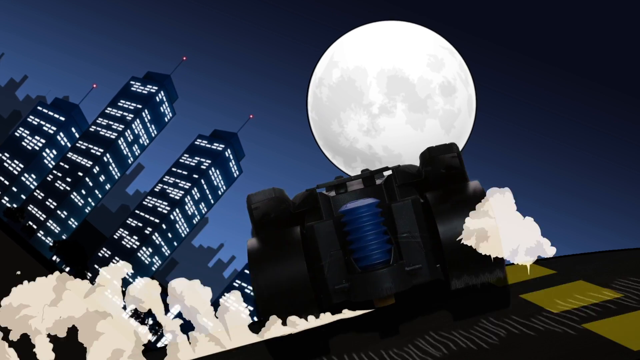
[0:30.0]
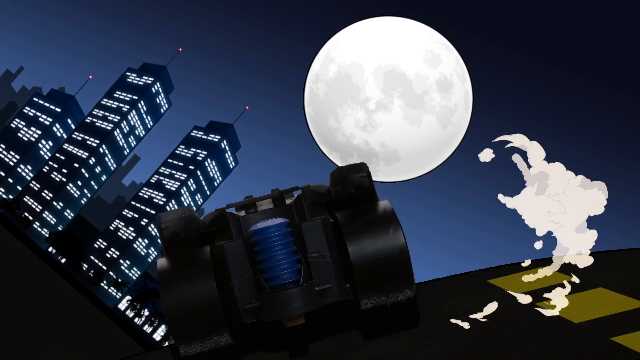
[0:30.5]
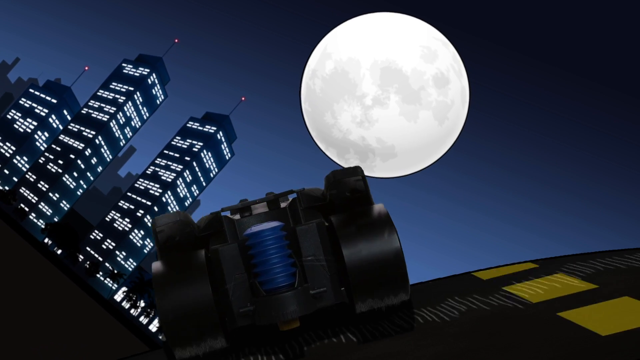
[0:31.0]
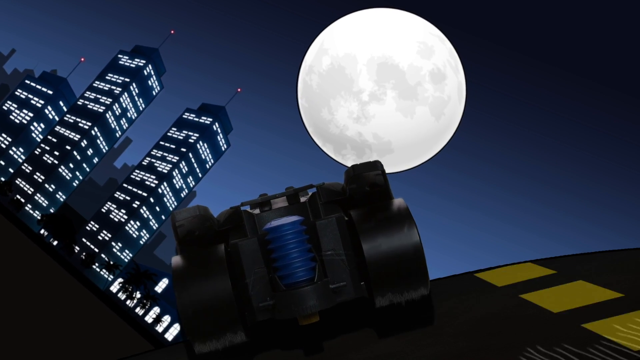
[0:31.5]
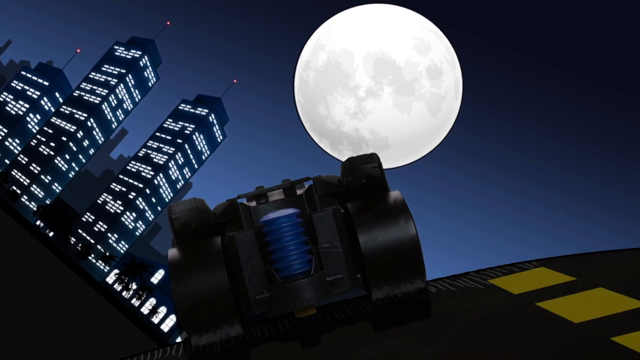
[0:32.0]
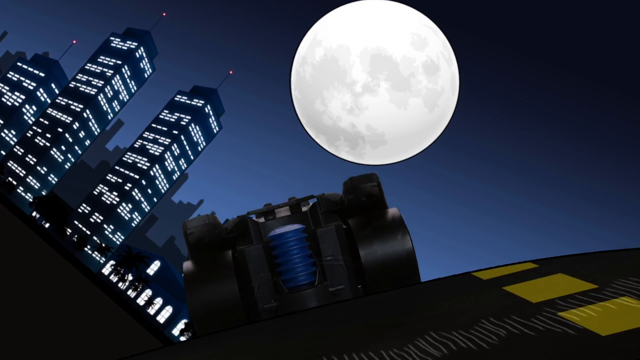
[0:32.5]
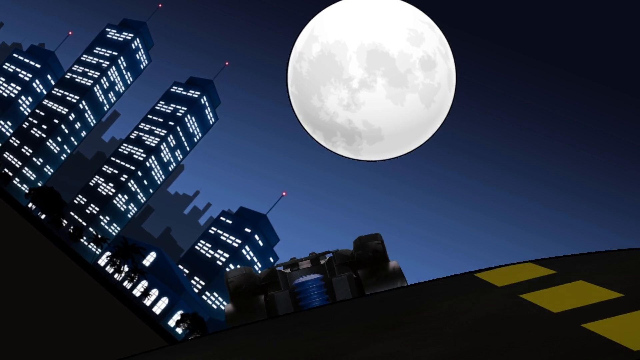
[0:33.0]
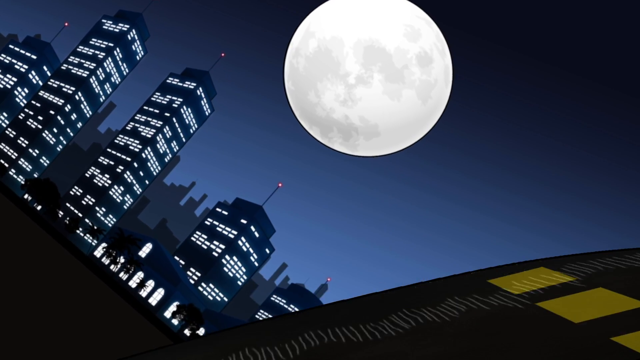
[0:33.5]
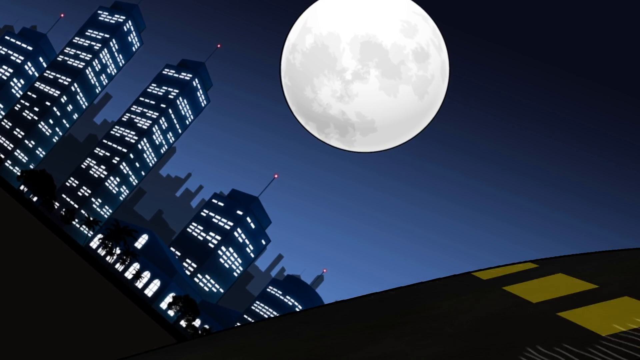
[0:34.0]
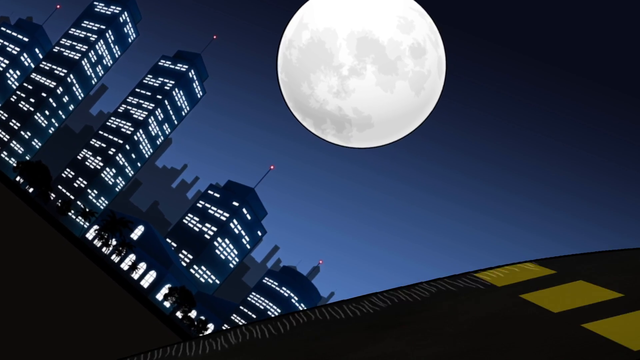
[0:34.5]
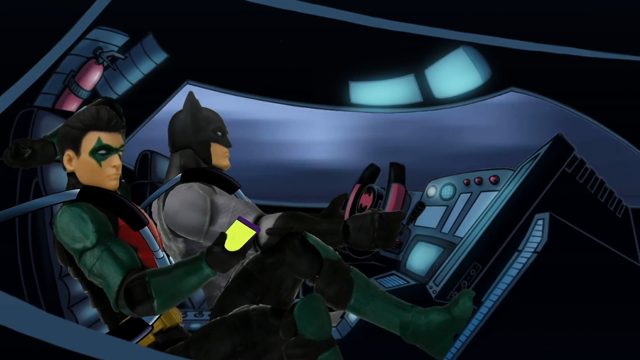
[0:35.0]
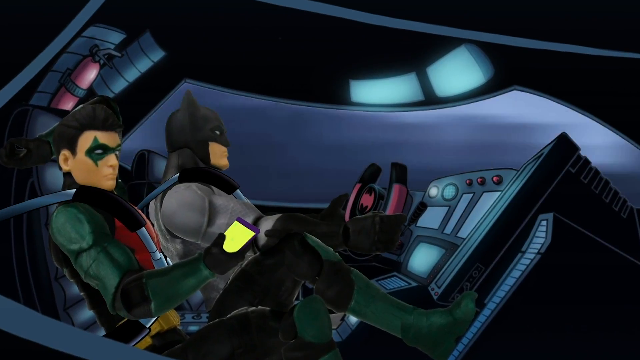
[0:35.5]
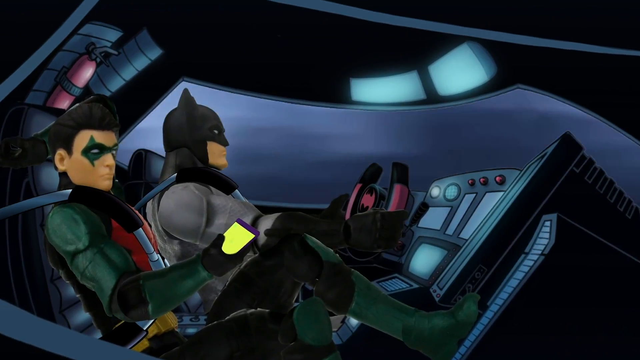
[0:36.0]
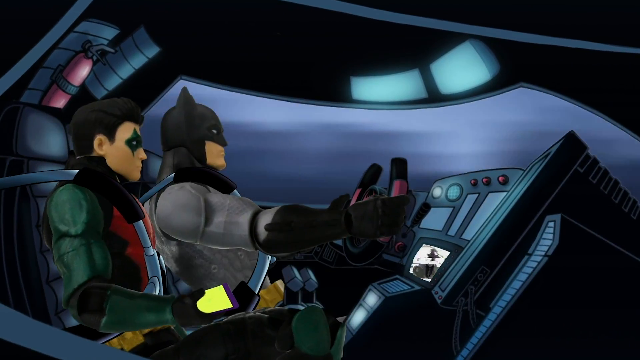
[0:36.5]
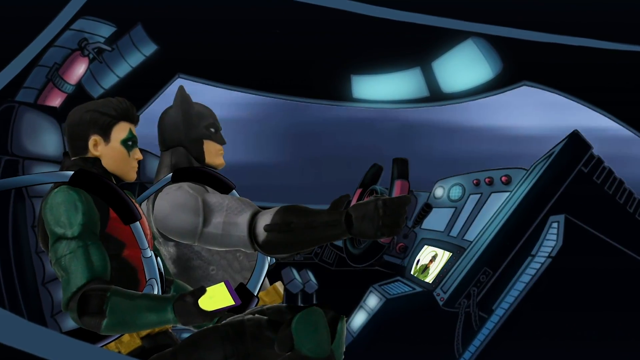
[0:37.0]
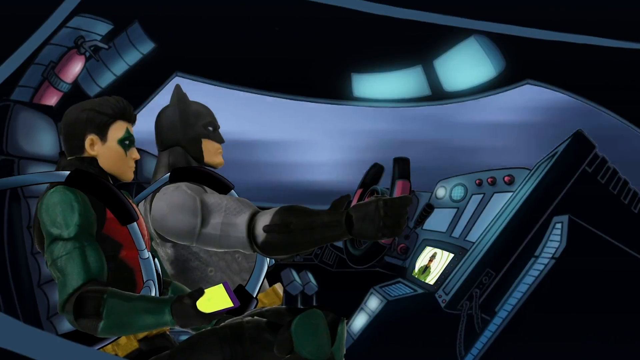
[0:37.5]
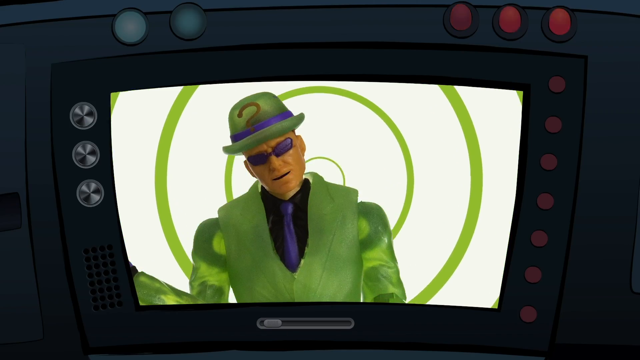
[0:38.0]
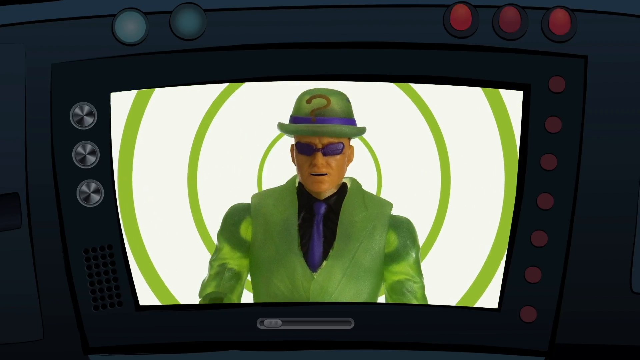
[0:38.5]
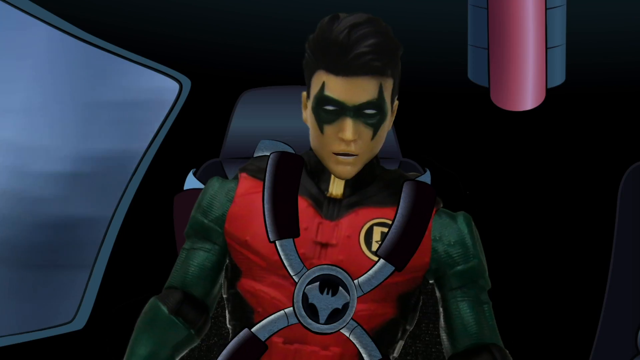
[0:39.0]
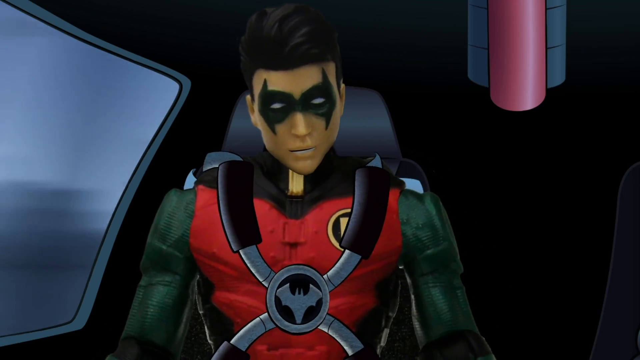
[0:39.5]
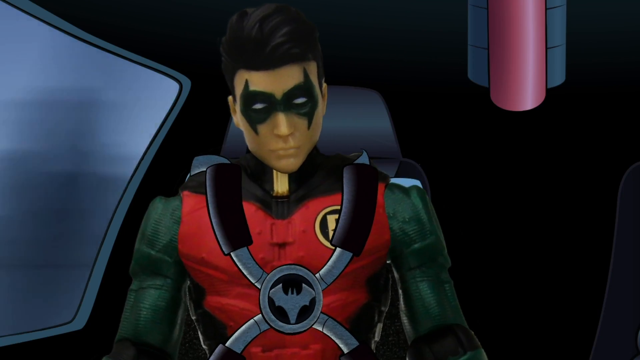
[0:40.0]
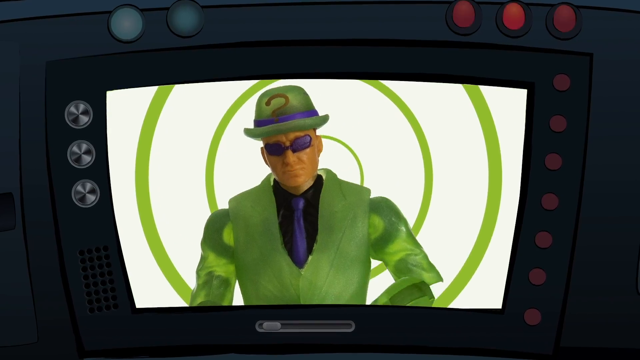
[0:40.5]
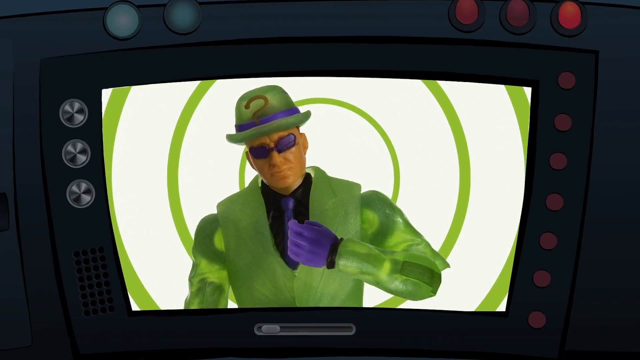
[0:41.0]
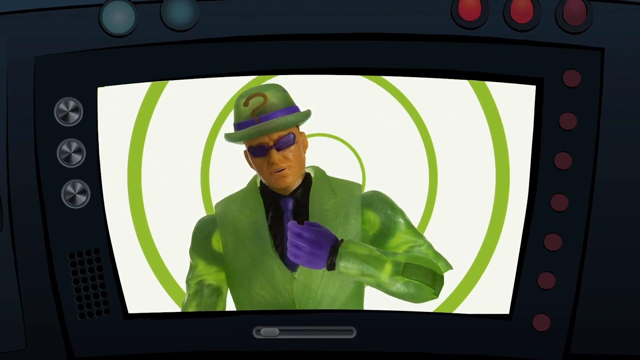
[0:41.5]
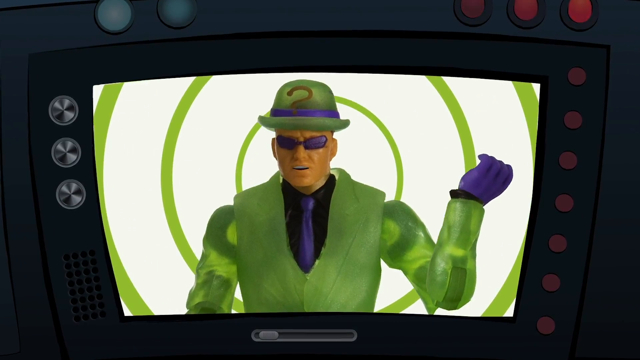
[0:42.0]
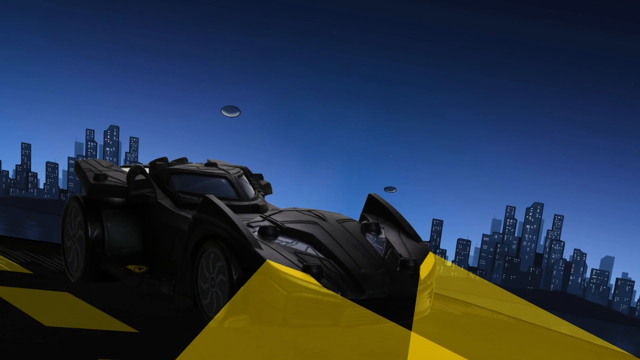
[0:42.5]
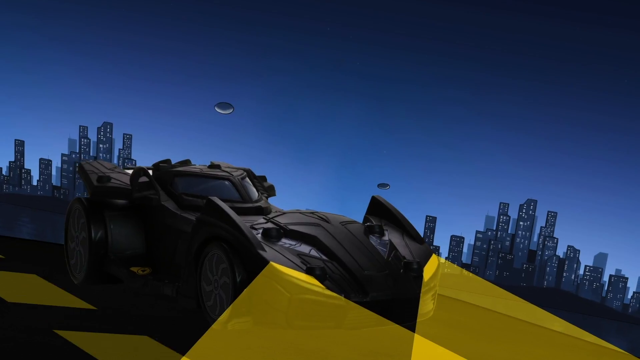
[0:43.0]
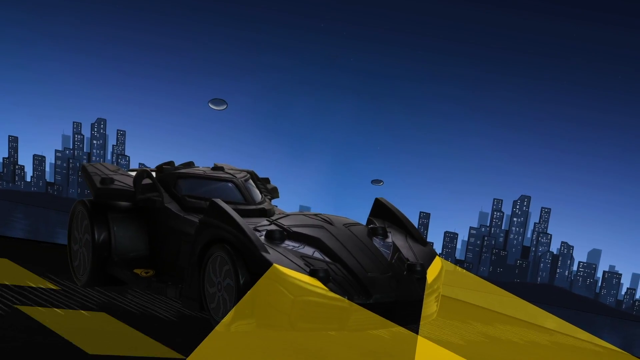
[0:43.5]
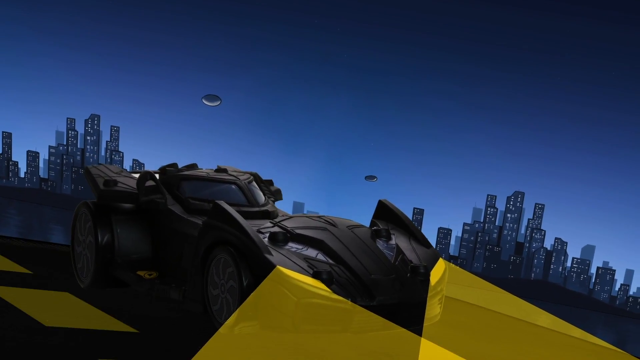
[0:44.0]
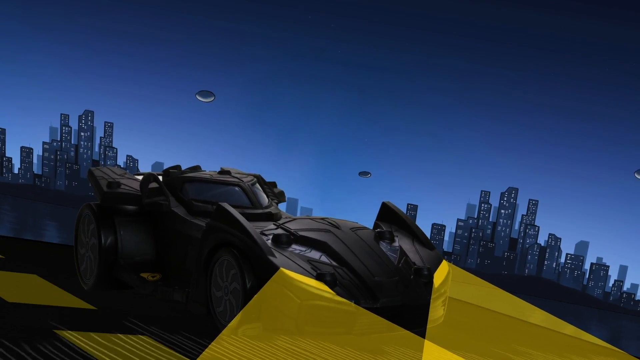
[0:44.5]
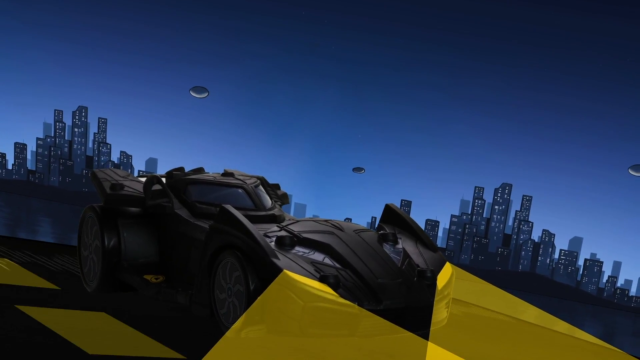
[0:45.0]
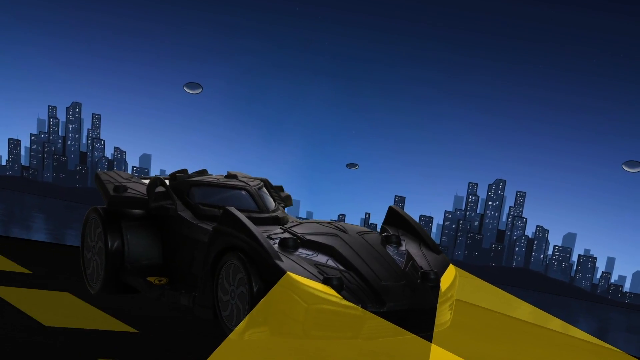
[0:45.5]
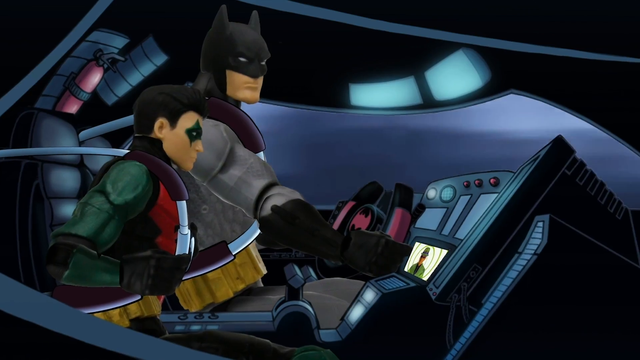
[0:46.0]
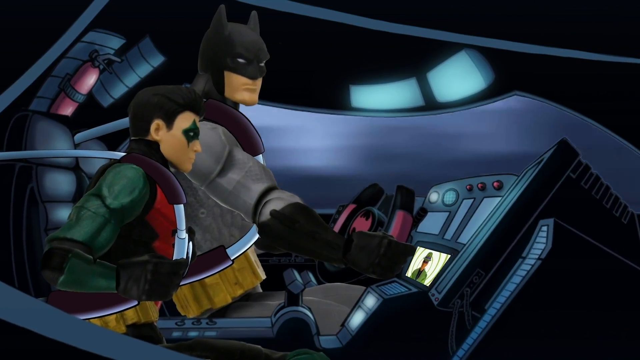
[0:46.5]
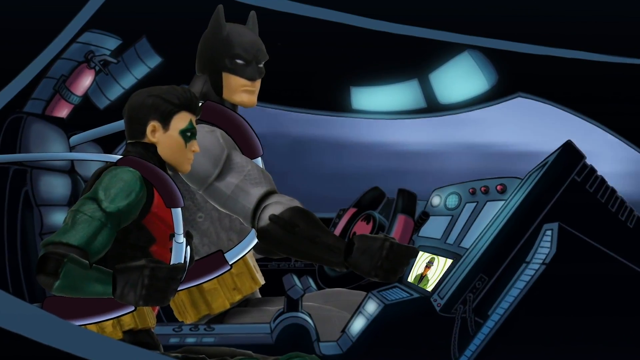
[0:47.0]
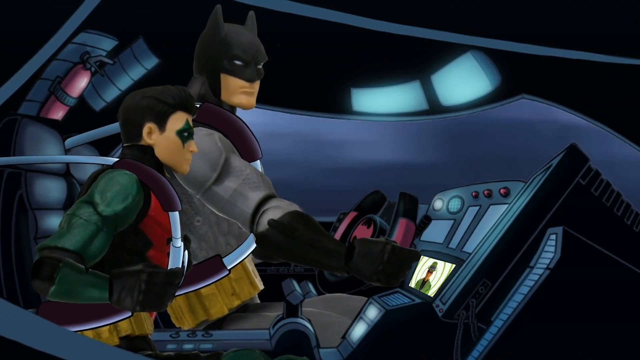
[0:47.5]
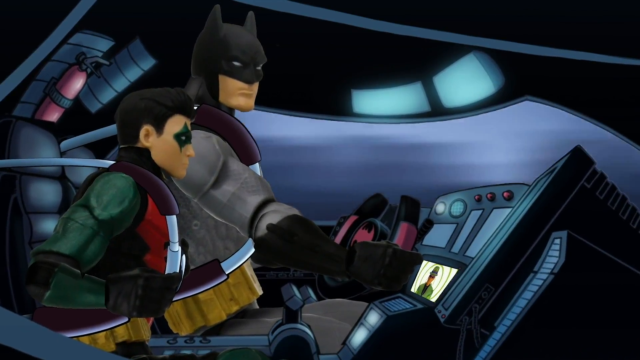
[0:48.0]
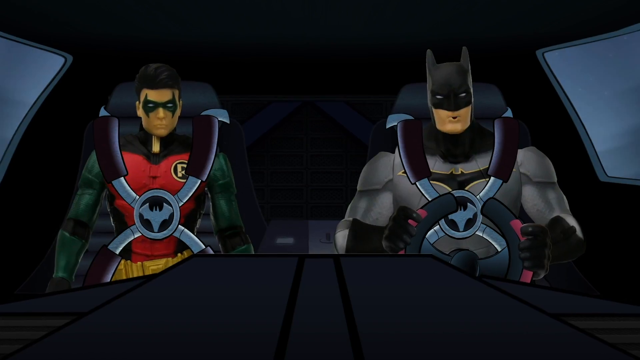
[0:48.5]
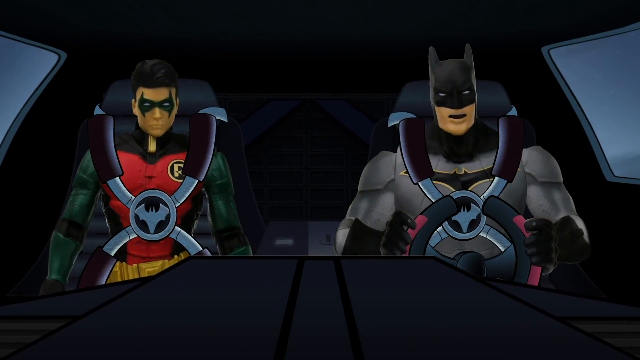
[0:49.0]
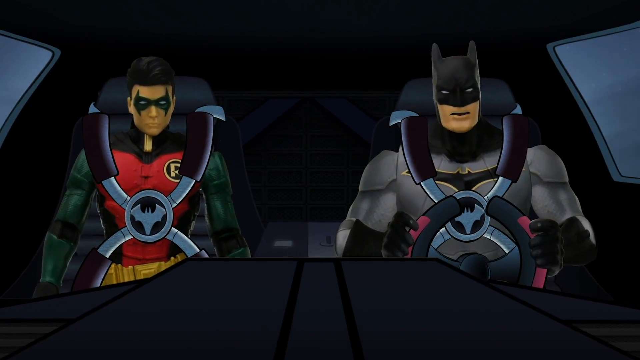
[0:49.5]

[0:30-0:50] The Batmobile drives off with puffs of smoke behind it. The Gotham City skyline, with lights and skyscrapers, is on the left, and on the right a full moon is up above the Batmobile. The Batmobile drives across the road and away, with the road moving under it. On a screen a red light pops up, and the Riddler appears talking, with a spiral green and white background behind him. Robin says something, and the Riddler talks again. The view then goes outside to the car driving across the Gotham City skyline, with skyscrapers sticking out in the background. An inside view shows Robin and Batman sitting in the car, both strapped into the Batmobile, and Batman starts to talk as they drive down the road into Gotham City.